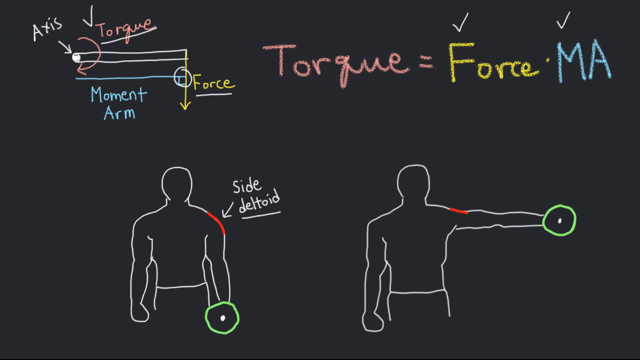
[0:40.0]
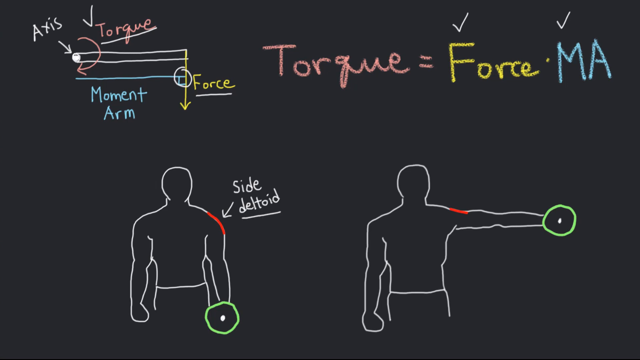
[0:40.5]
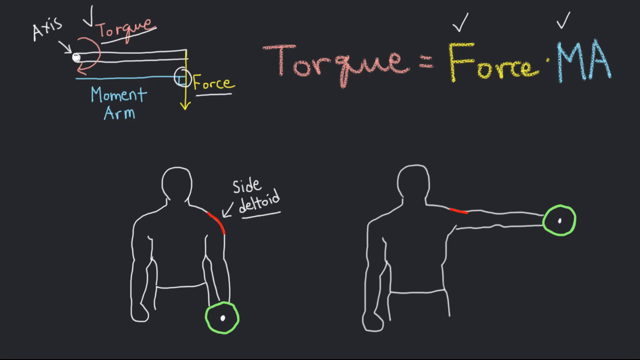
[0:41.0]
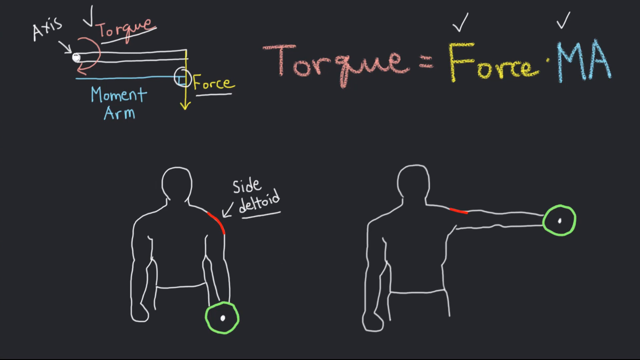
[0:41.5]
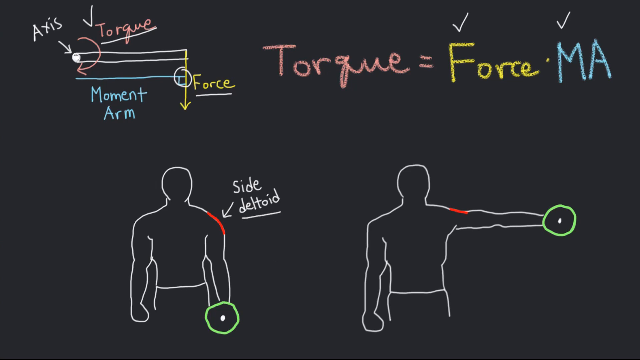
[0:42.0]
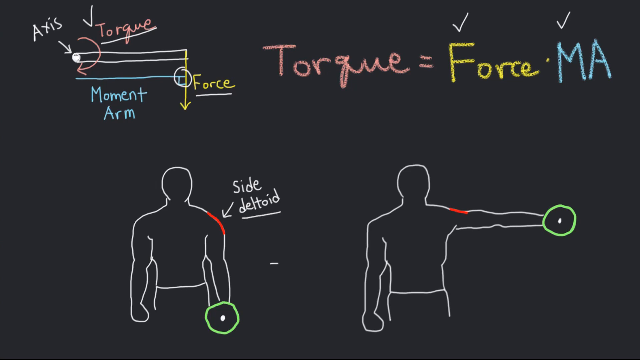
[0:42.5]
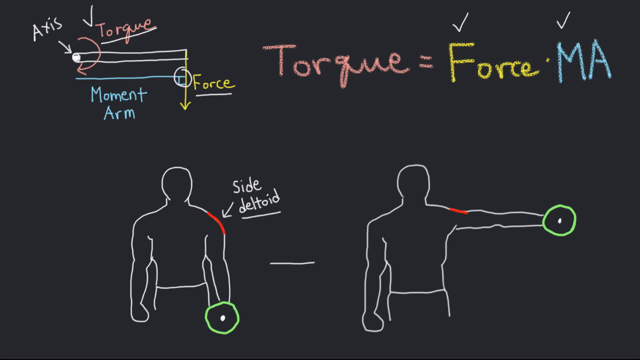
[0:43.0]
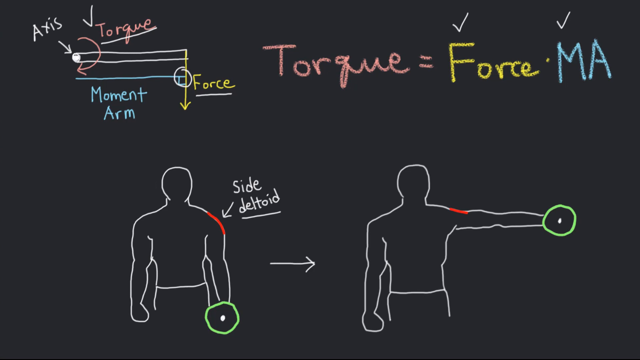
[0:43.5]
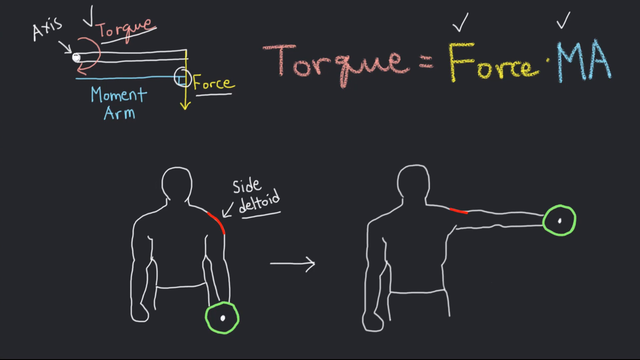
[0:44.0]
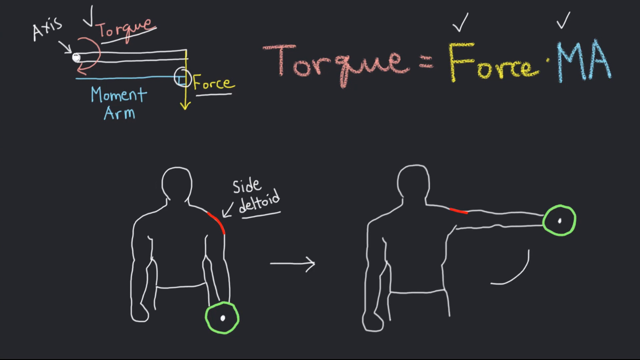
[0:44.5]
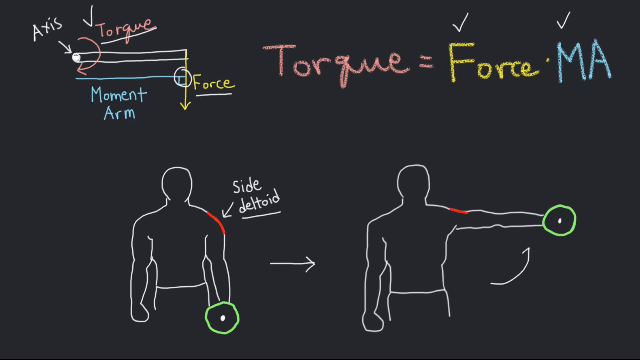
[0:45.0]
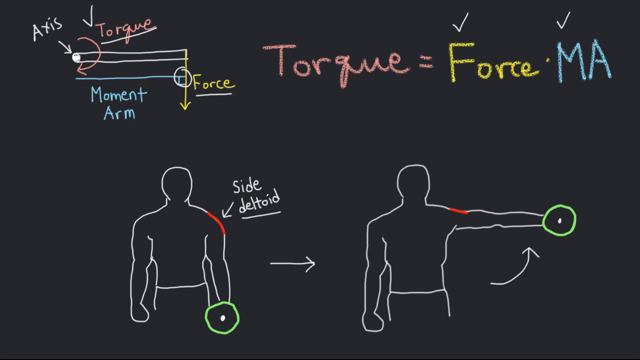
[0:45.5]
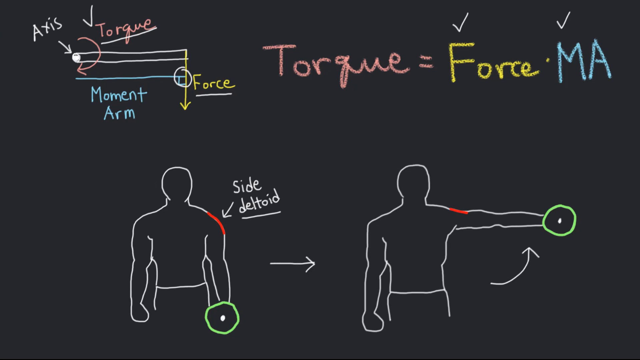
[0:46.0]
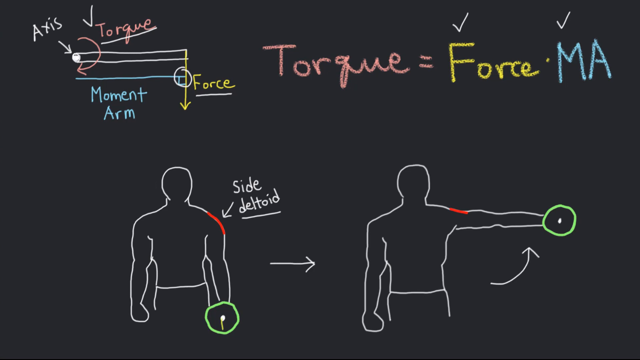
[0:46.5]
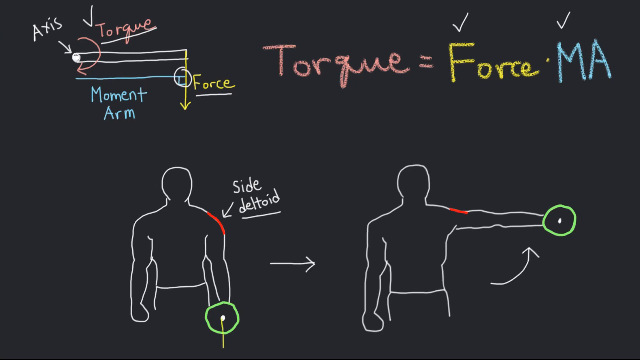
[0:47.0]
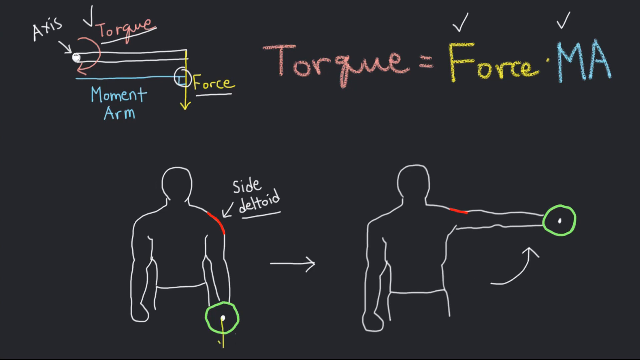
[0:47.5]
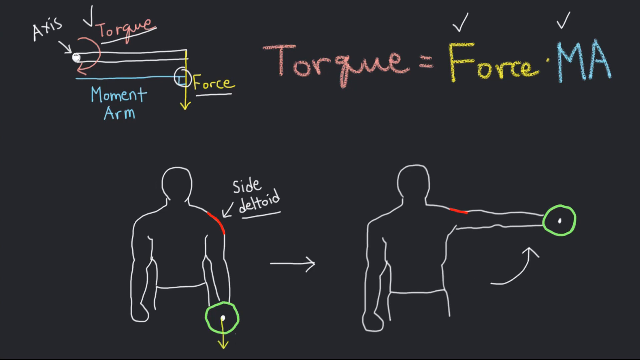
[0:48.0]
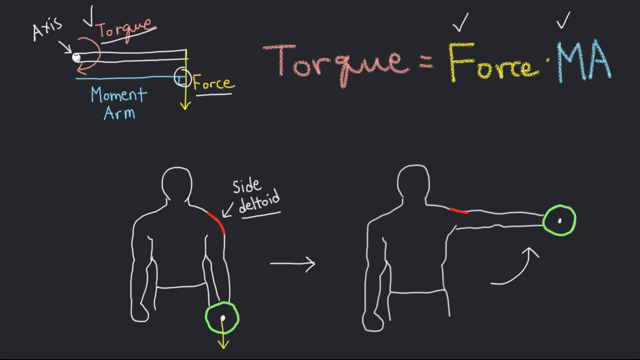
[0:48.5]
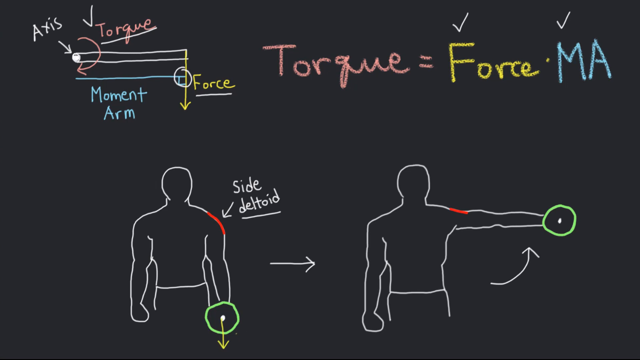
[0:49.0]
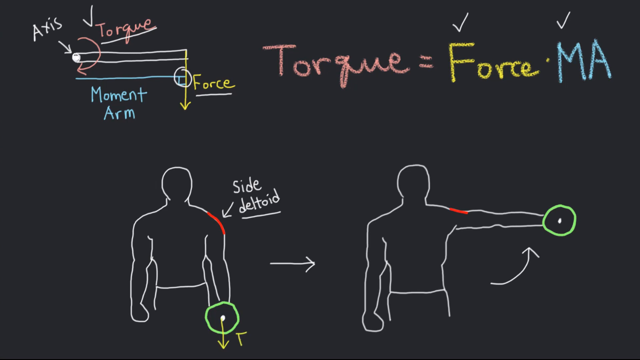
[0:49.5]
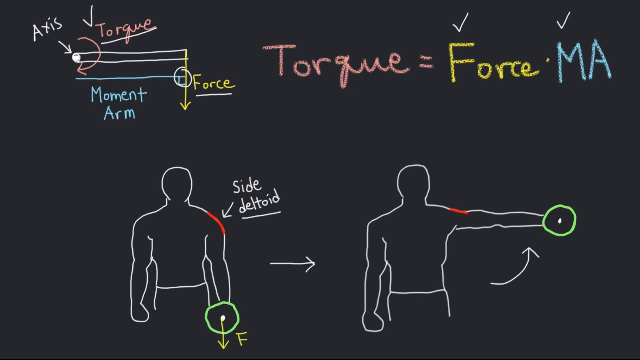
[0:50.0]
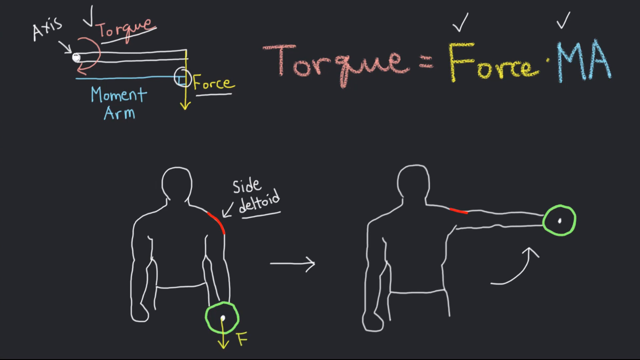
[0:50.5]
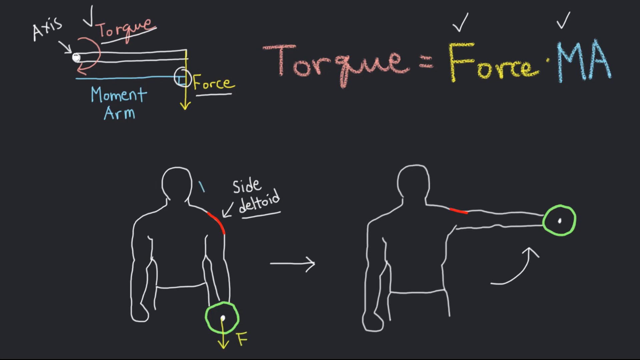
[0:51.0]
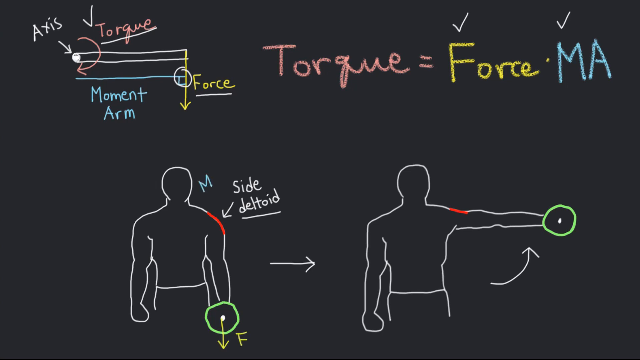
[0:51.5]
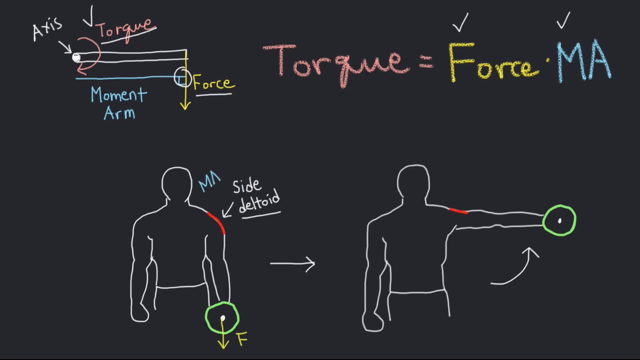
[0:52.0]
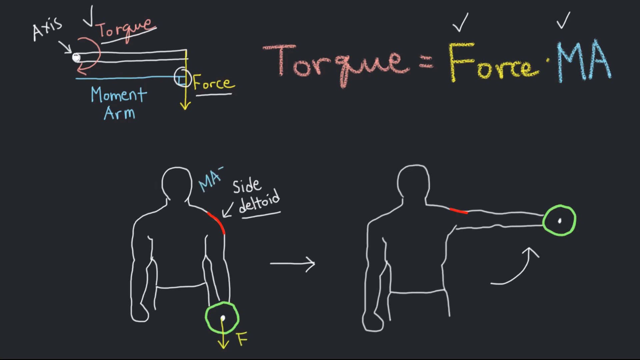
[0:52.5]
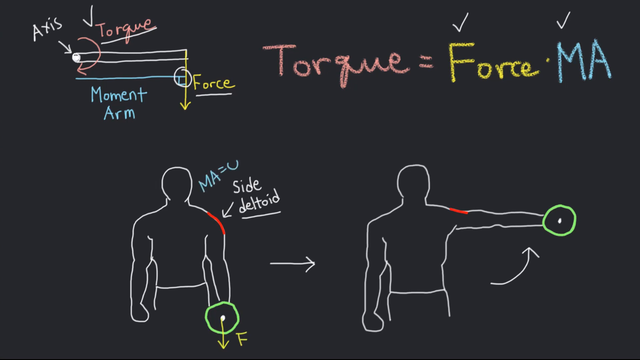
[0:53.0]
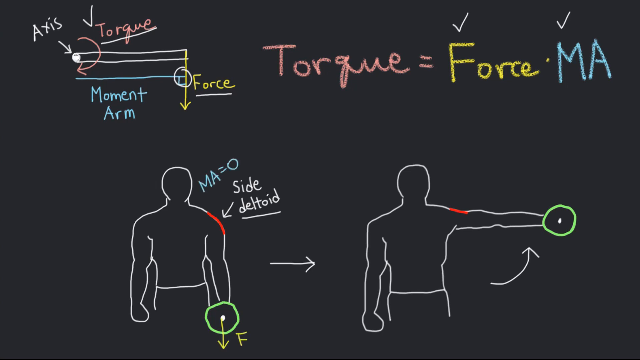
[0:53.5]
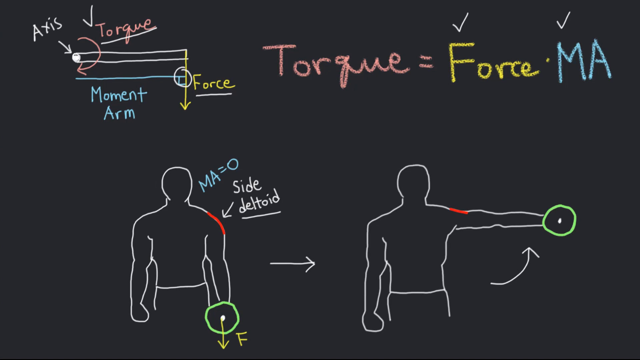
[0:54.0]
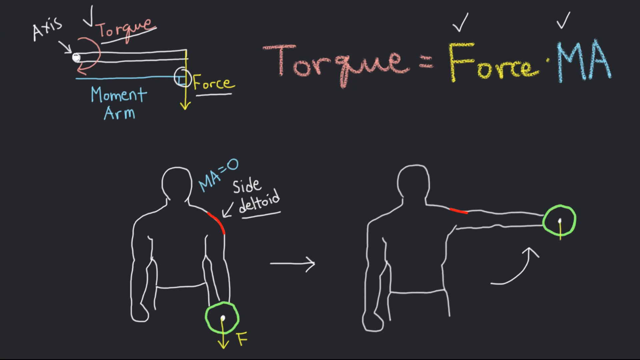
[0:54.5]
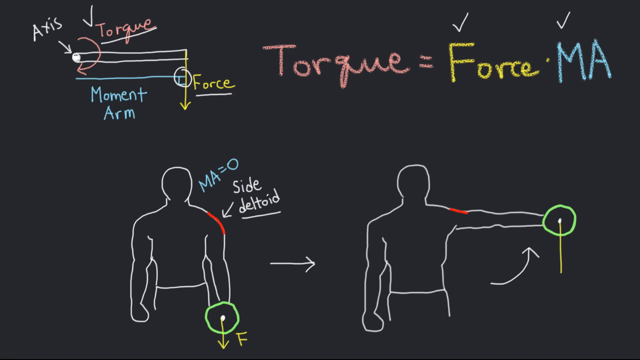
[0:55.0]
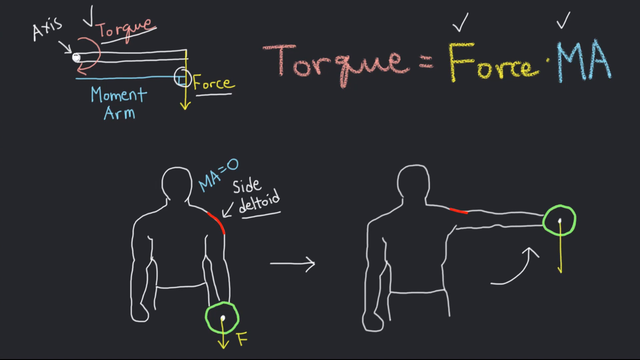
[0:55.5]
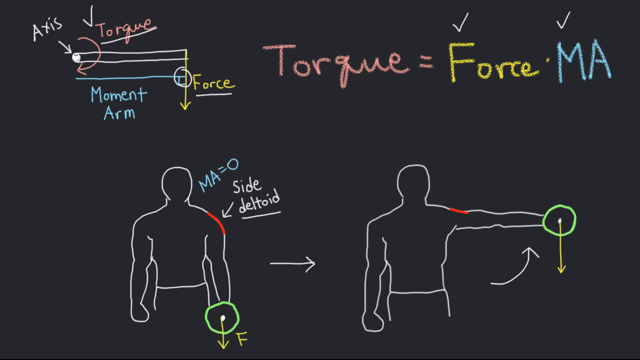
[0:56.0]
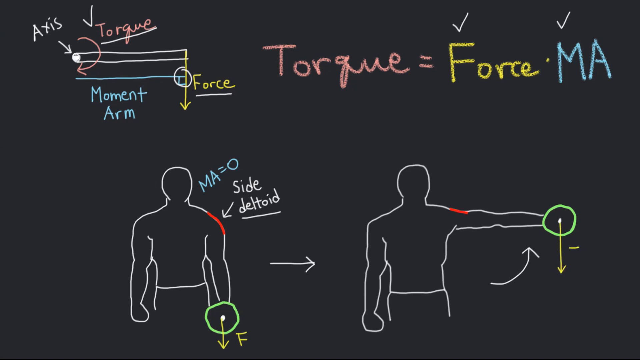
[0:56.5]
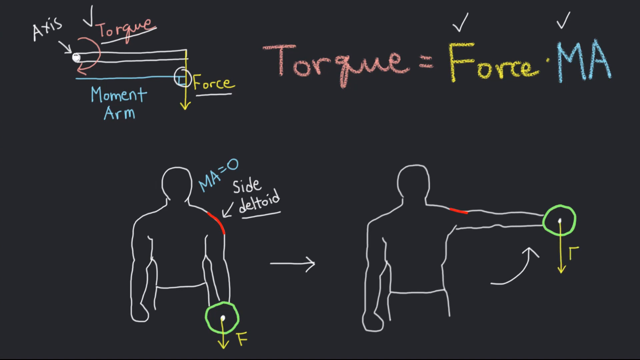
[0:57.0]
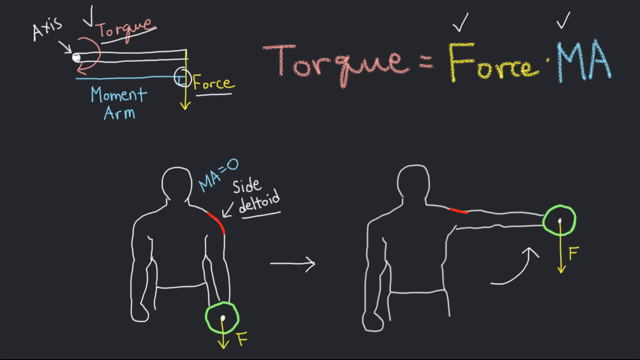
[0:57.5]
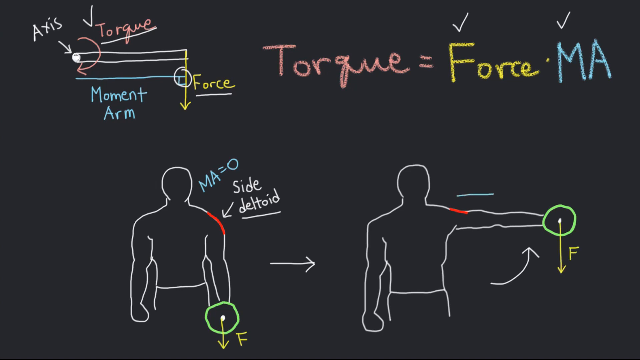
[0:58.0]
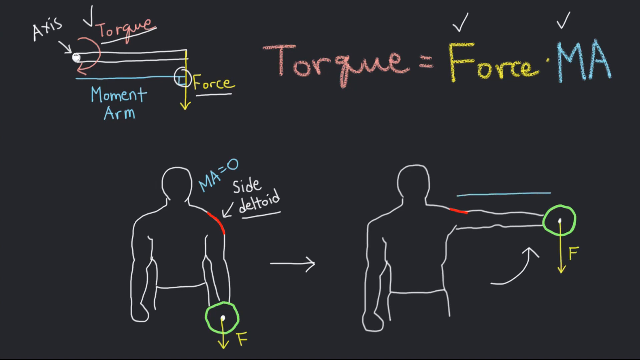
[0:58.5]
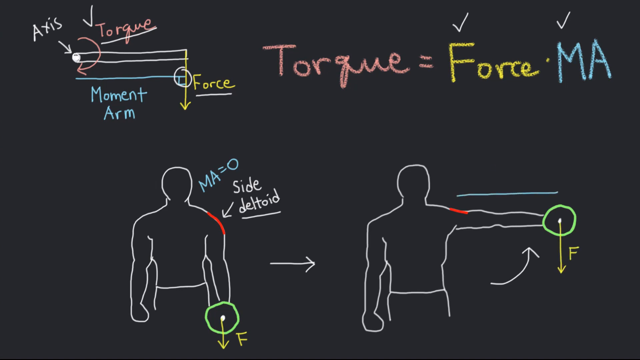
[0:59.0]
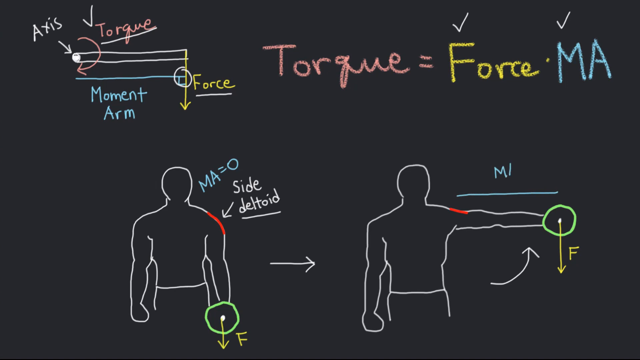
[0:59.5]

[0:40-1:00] The blackboard diagram continues with the formula torque equals force times ma. An arrow is drawn from the silhouette figure on the bottom left to the one on the bottom right, and "MA equals zero" appears next to the head of the left figure along with another arrow. The arrow kind of indicates that the left figure will move toward the right figure and lift his left arm up. An arrow on the right figure kind of curves, as if lifting his arm up. A line is drawn over his left arm labeled MA, which looks like an incomplete formula. A line with an arrow and an F goes downwards from the weight in the right figure's arm. It looks like a formula about force or mass, something like that, is being completed above the right figure.